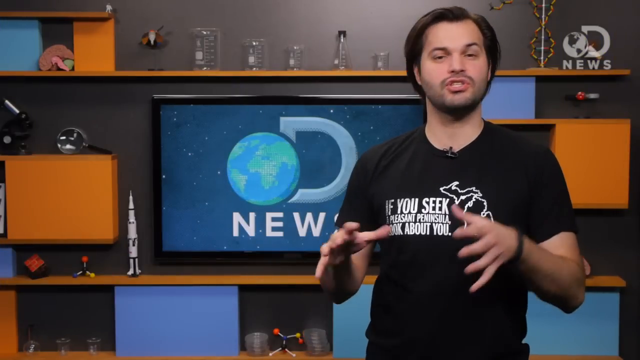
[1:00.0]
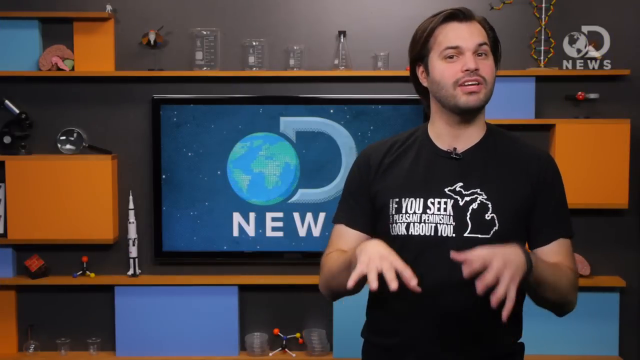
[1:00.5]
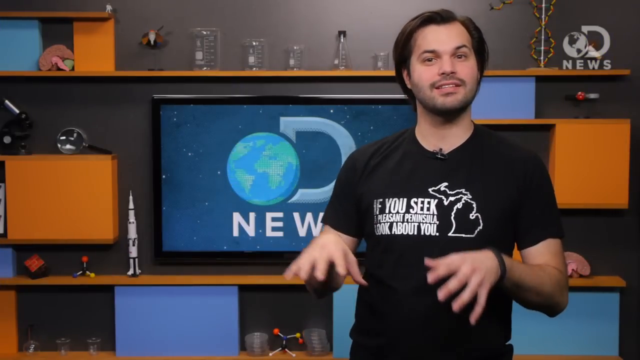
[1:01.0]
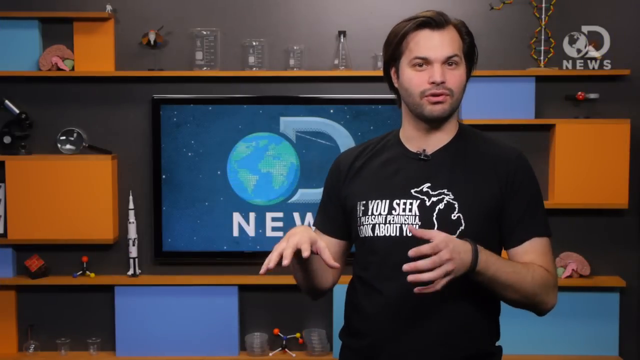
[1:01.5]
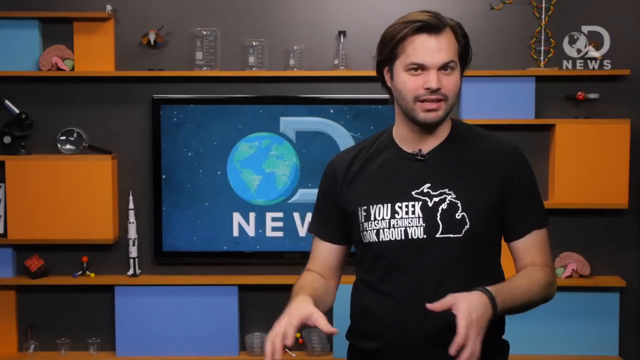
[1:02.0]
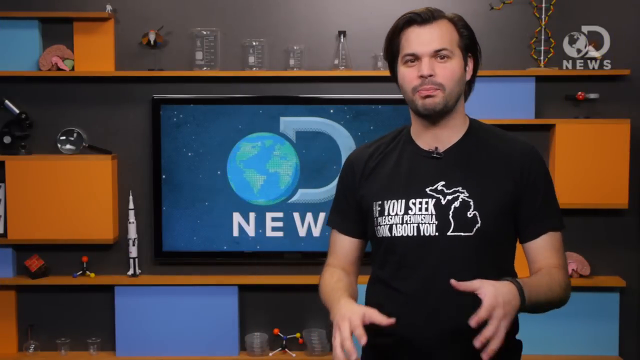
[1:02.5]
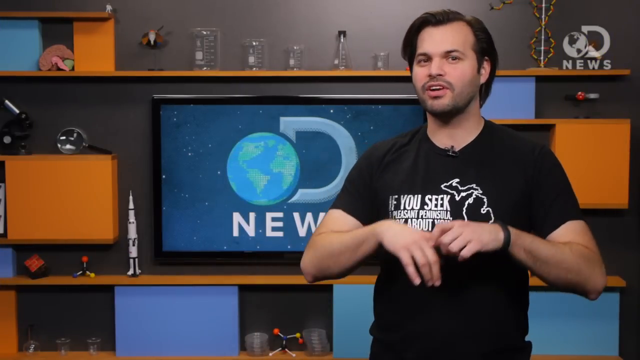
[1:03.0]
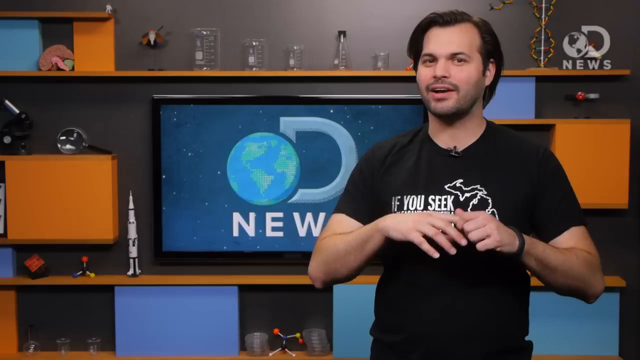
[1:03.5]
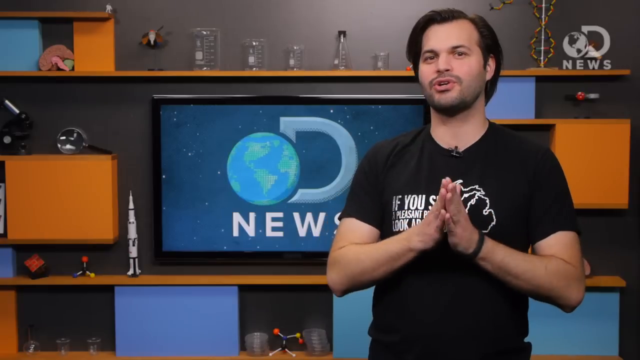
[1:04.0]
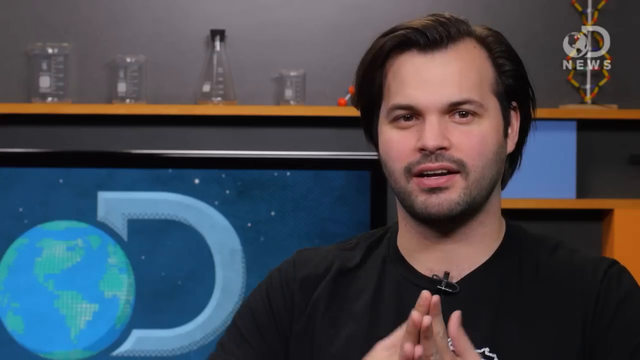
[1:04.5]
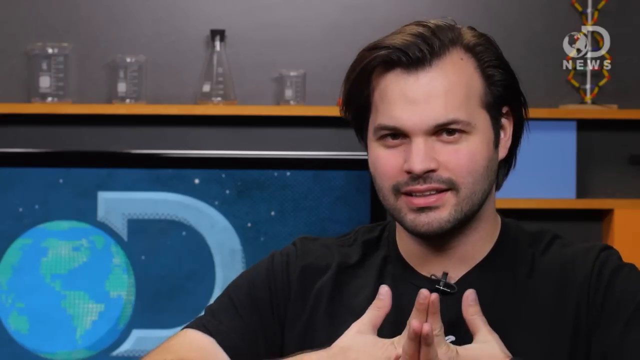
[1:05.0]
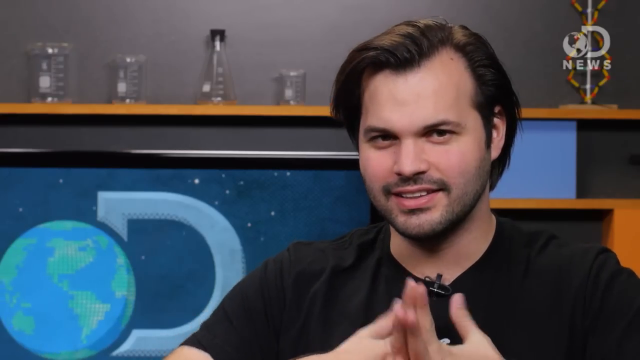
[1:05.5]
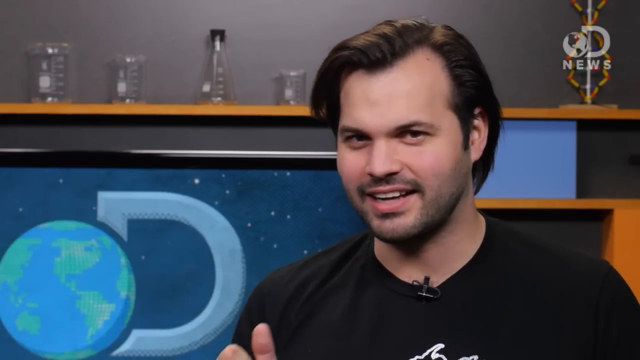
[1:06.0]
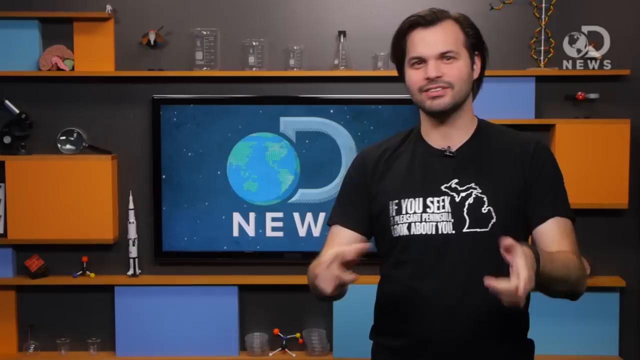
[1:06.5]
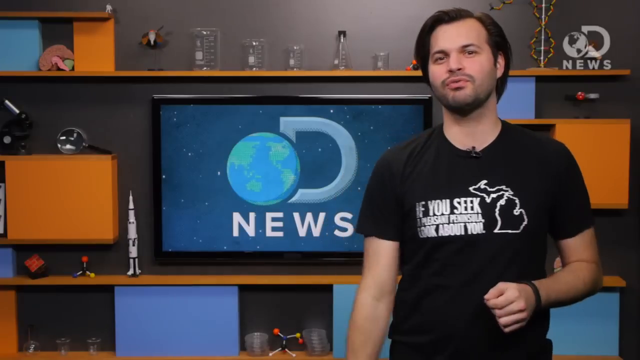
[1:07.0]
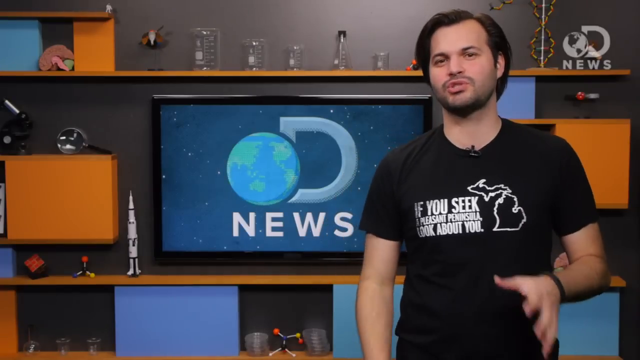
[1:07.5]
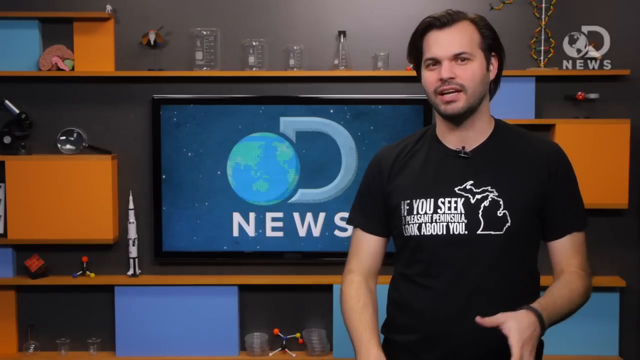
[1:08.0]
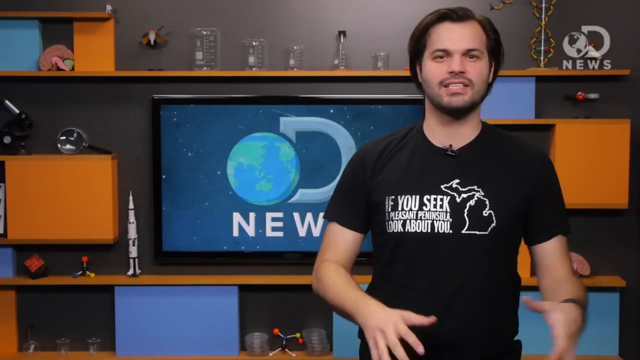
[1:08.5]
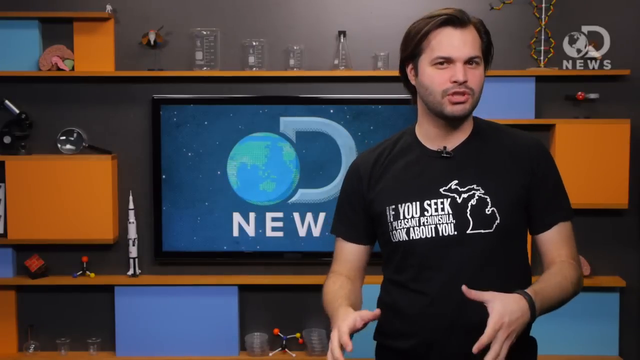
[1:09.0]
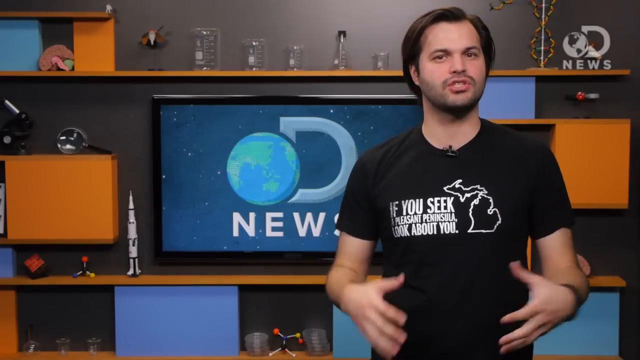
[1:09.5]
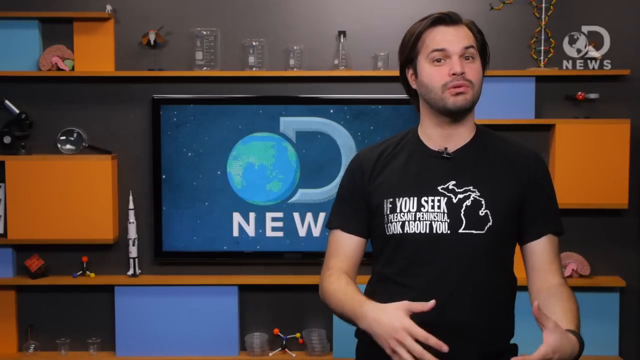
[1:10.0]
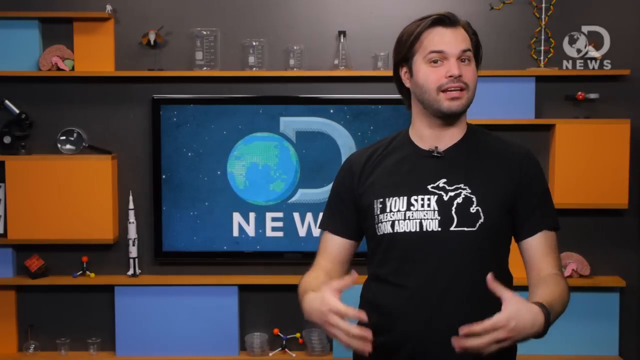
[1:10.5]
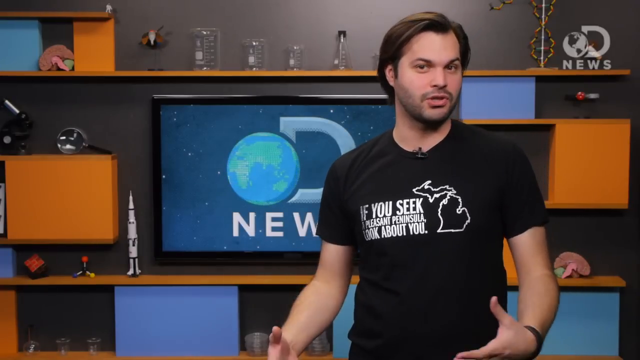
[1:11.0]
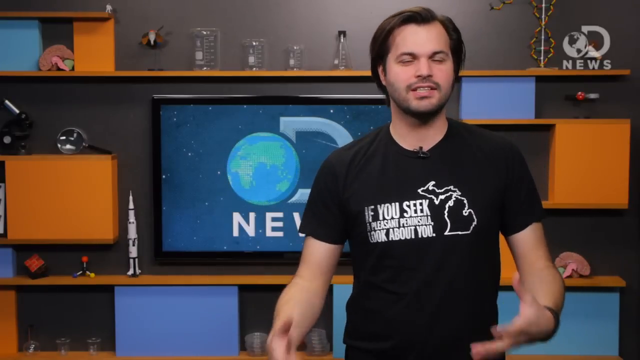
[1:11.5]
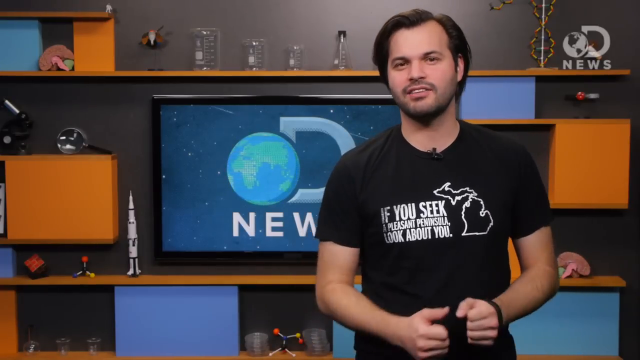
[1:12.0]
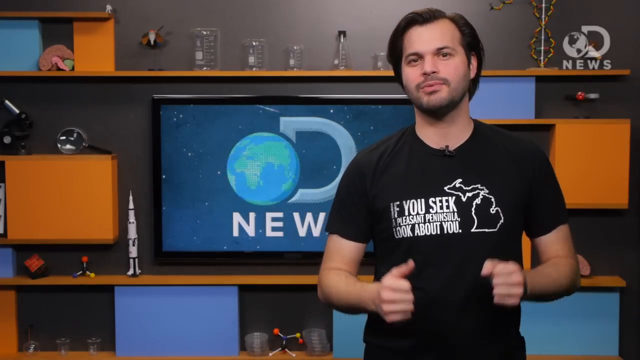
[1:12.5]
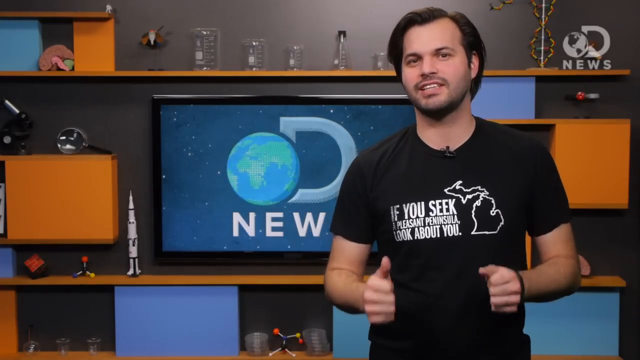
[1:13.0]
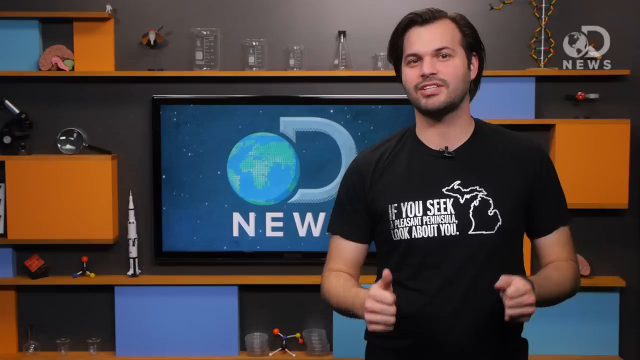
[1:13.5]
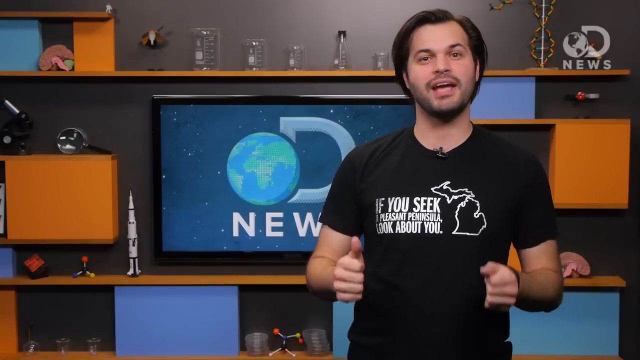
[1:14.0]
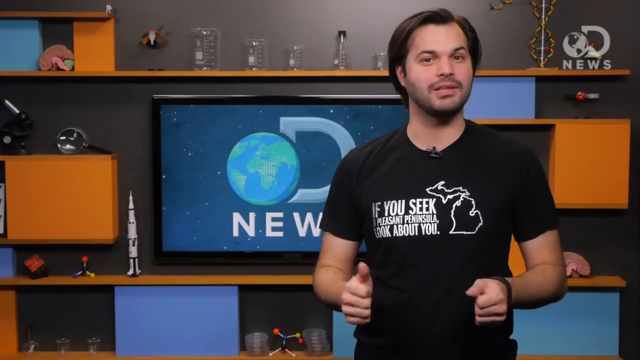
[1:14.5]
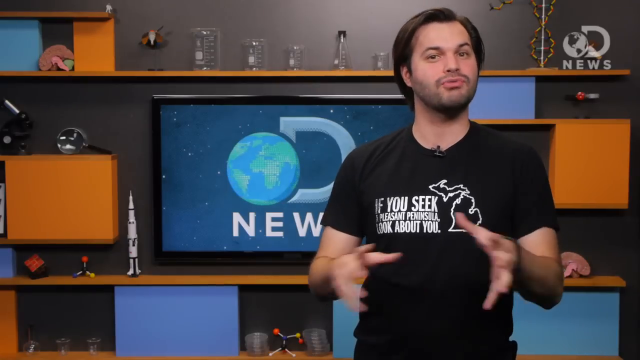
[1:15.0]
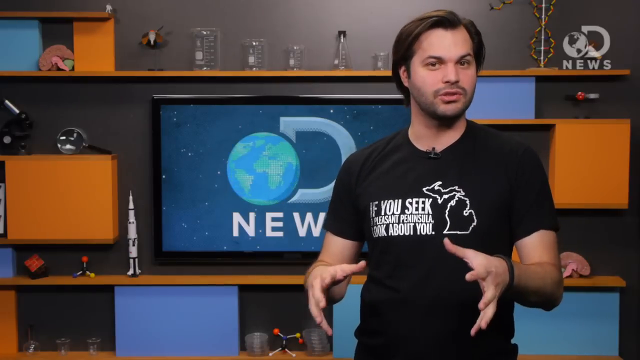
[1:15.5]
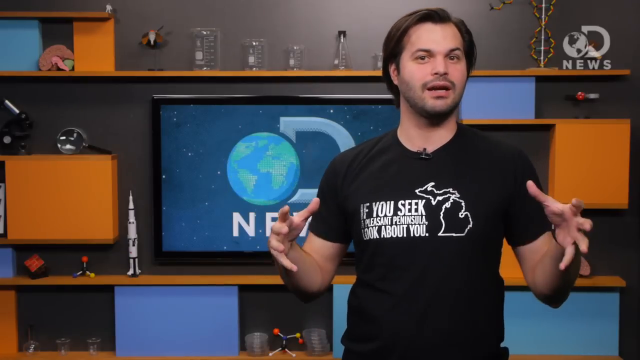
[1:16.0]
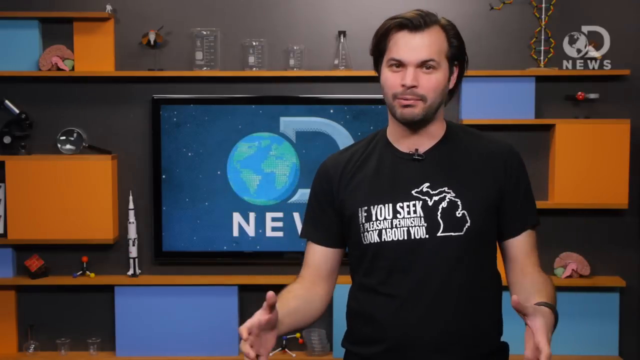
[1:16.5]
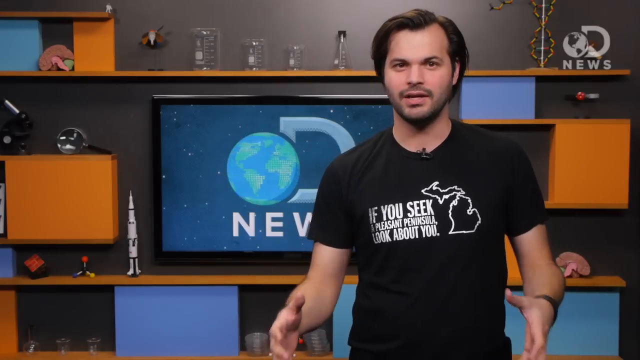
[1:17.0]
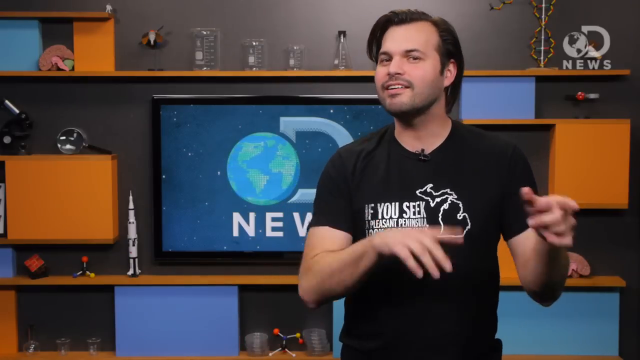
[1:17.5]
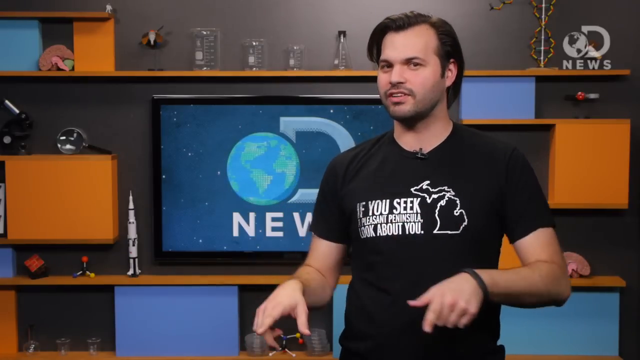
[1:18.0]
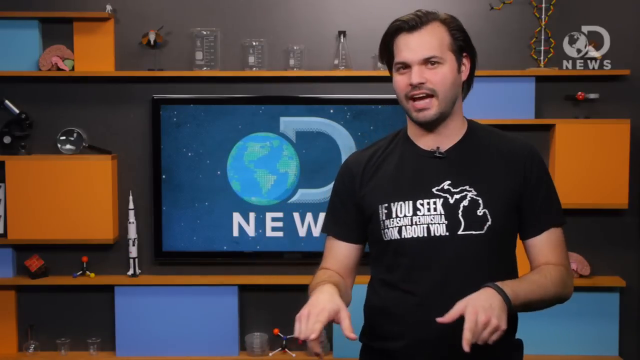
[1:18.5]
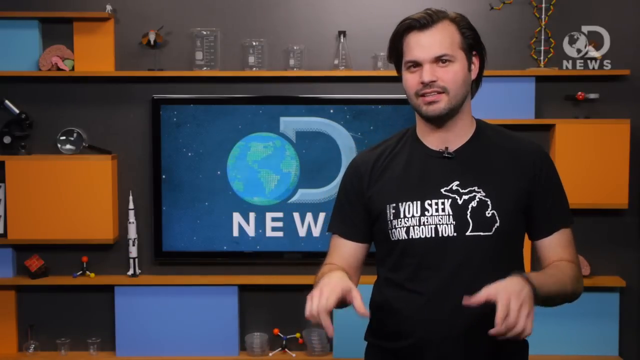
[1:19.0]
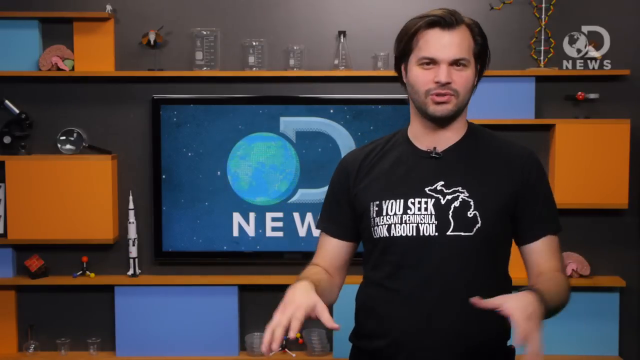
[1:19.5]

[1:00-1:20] Trace, who works for the TV news channel DNews, stands in front of a background that includes a TV of about 32 inches, a model of the Saturn V rocket, a magnifying glass and two shelves; on the top shelf is a series of five measuring cups or beakers. He is a young man with a slight beard and brunette hair, wearing a shirt that says "if you seek a pleasant peninsula, look about you" with a silhouette of the state of Michigan.